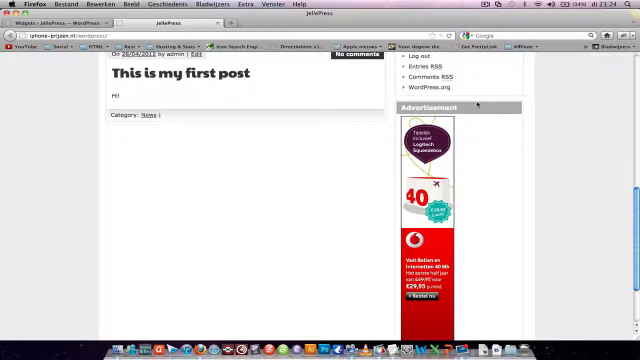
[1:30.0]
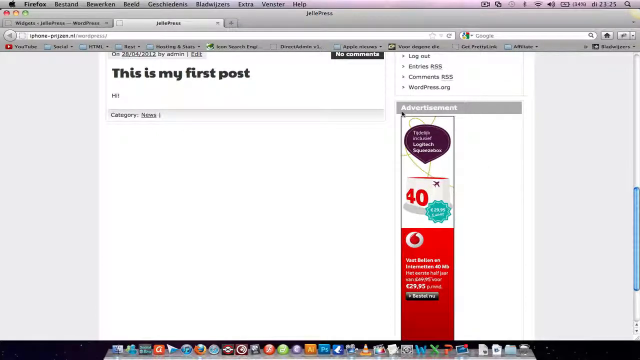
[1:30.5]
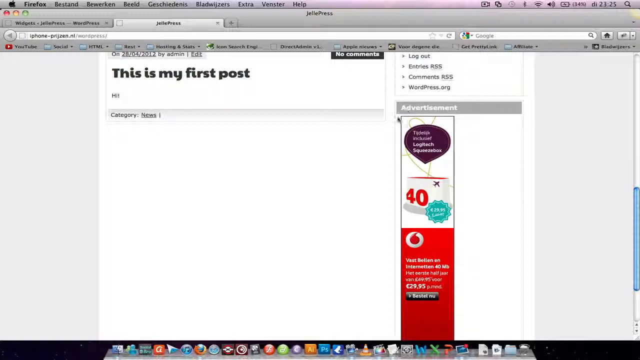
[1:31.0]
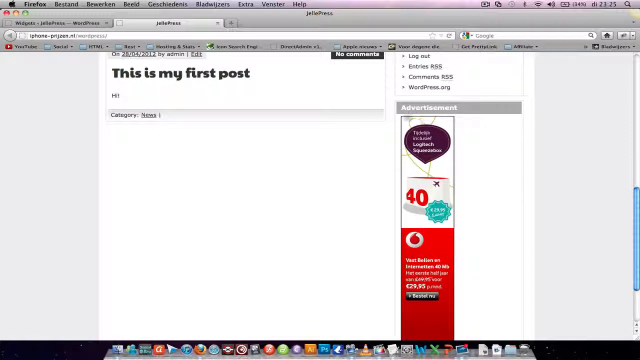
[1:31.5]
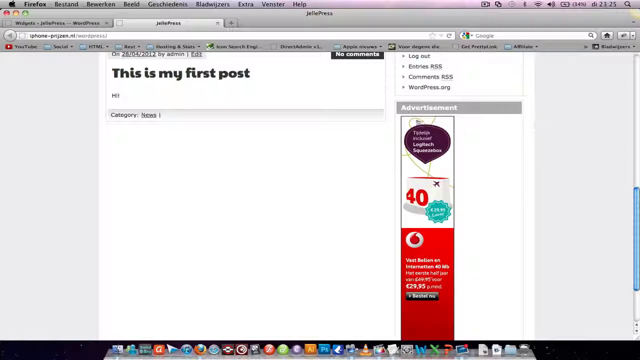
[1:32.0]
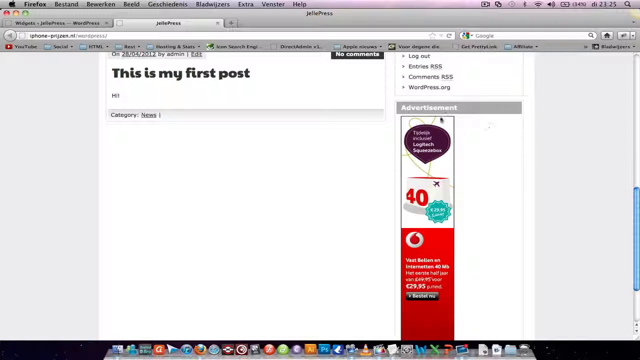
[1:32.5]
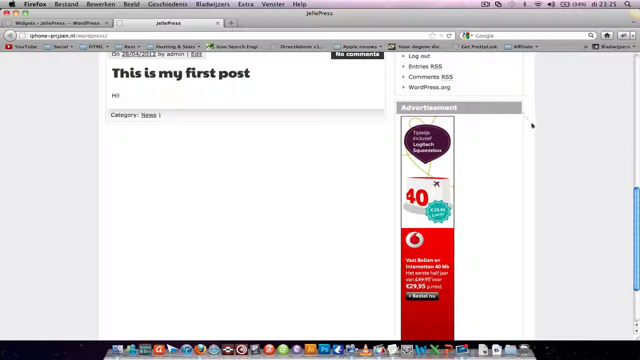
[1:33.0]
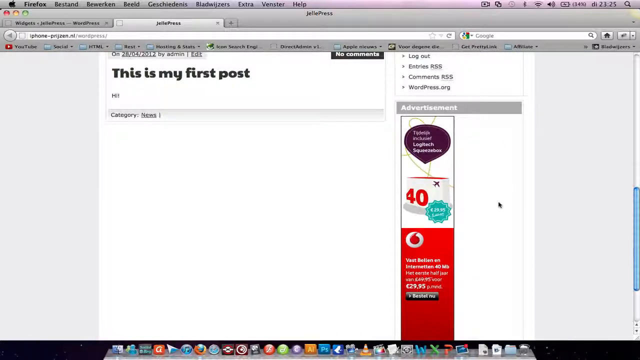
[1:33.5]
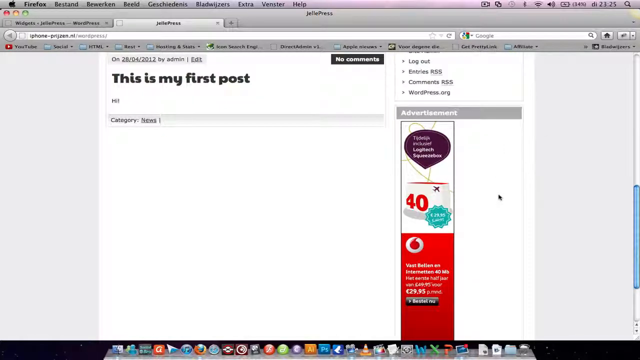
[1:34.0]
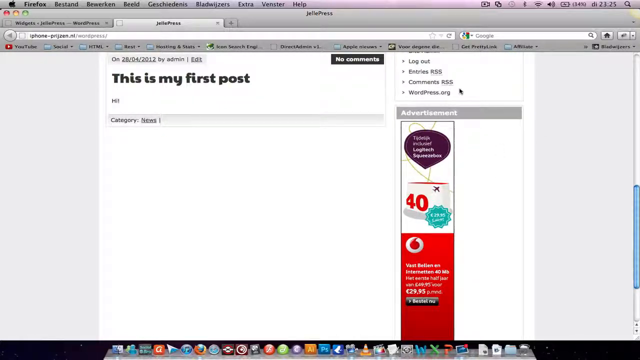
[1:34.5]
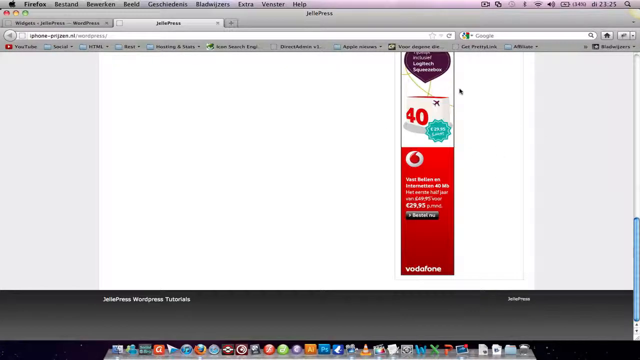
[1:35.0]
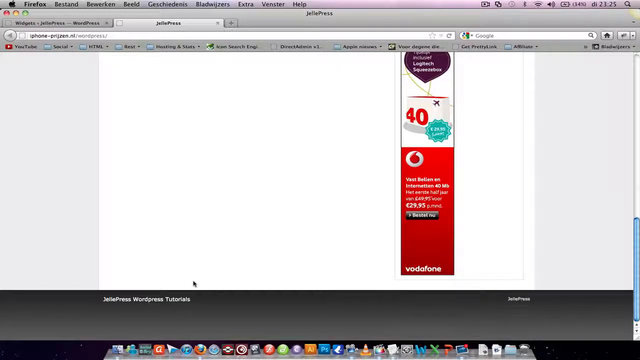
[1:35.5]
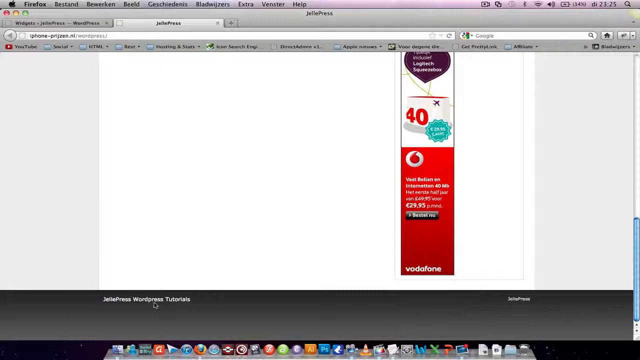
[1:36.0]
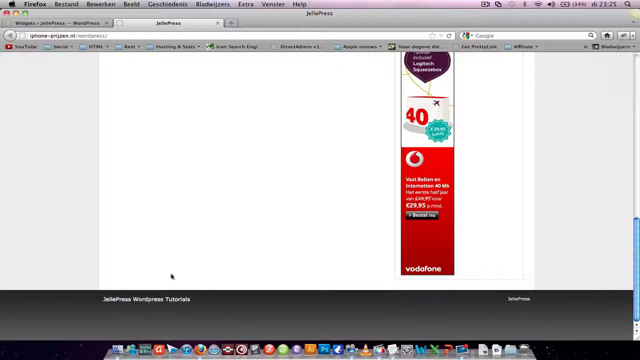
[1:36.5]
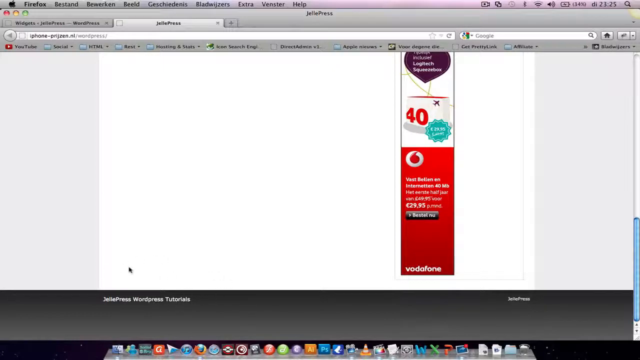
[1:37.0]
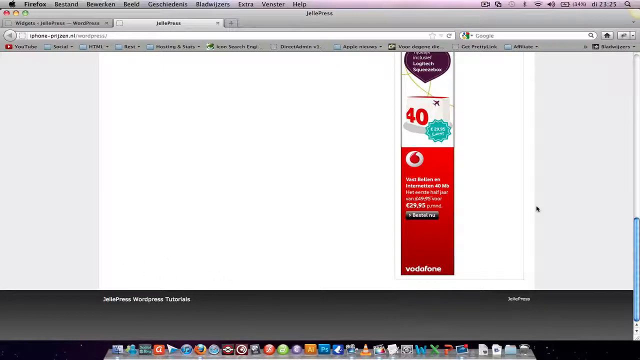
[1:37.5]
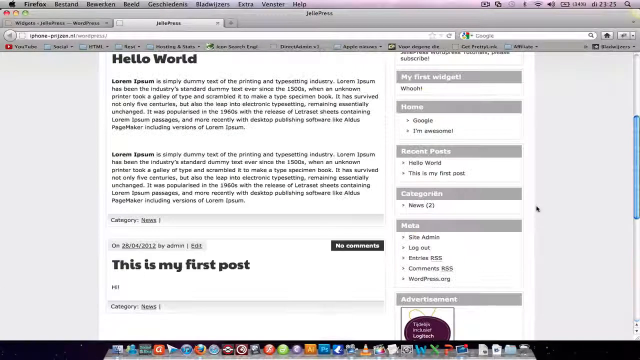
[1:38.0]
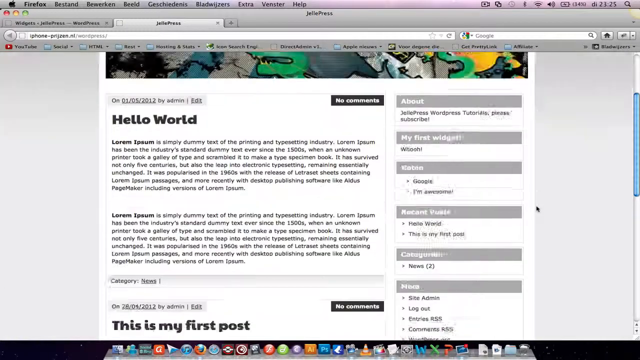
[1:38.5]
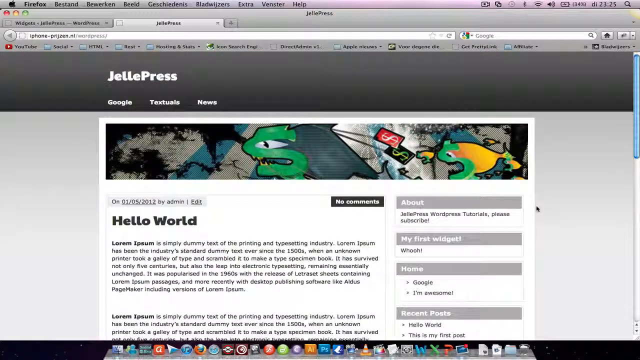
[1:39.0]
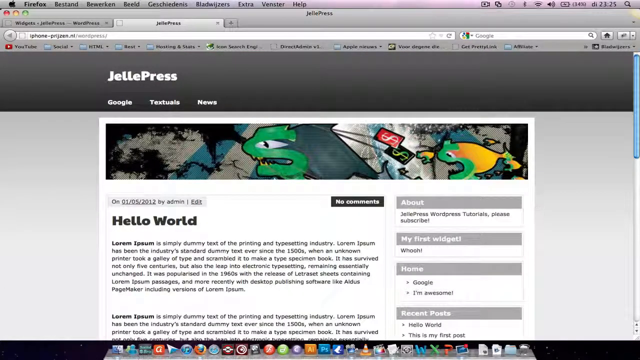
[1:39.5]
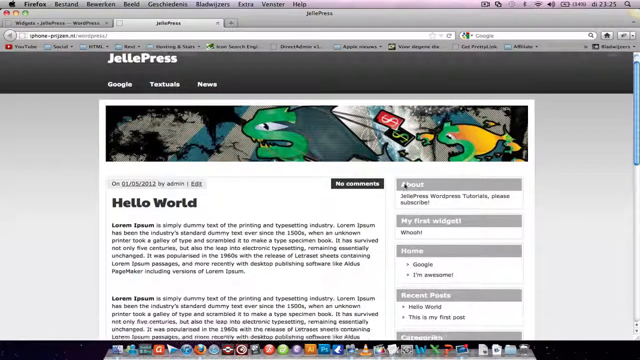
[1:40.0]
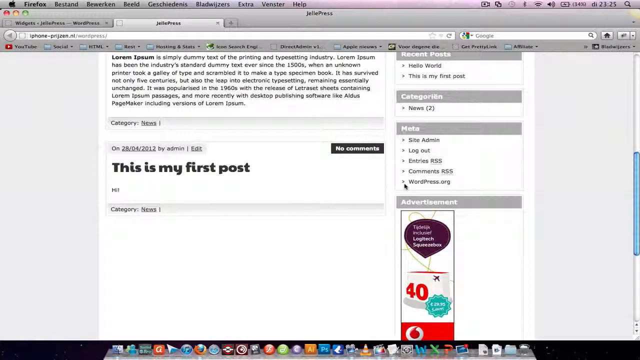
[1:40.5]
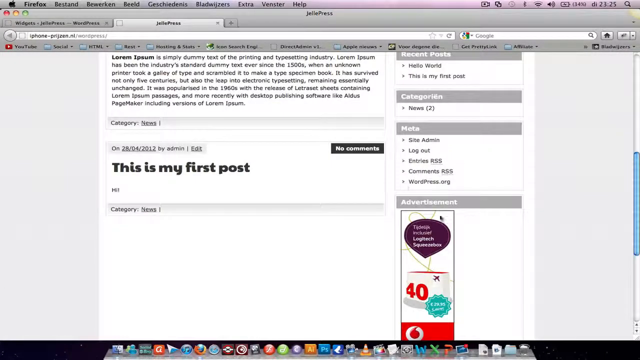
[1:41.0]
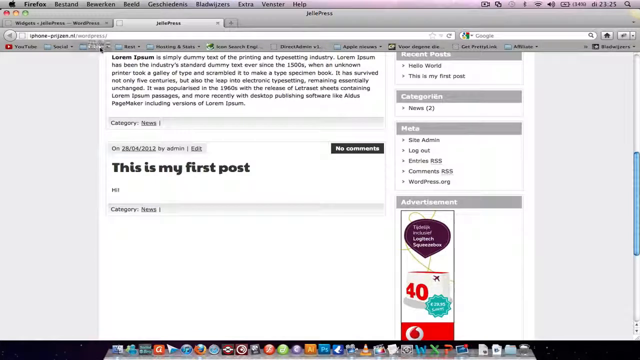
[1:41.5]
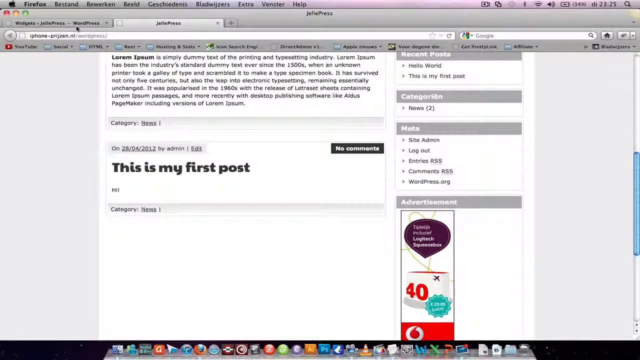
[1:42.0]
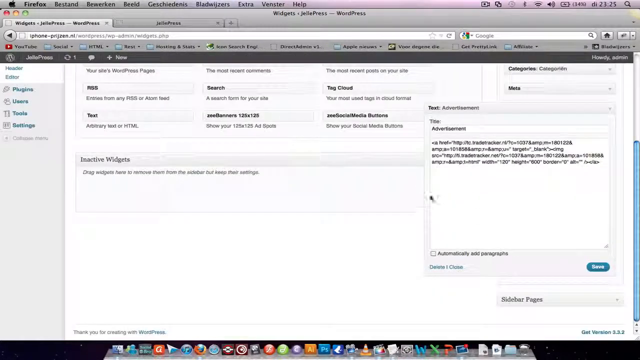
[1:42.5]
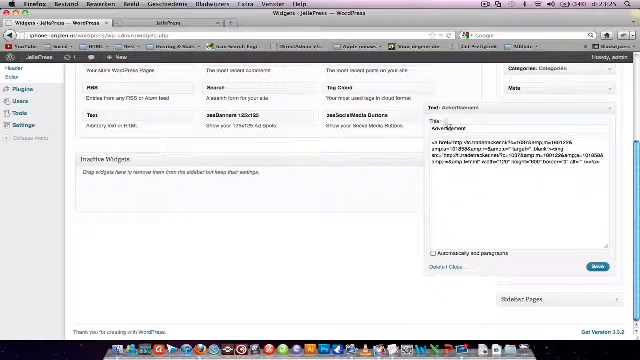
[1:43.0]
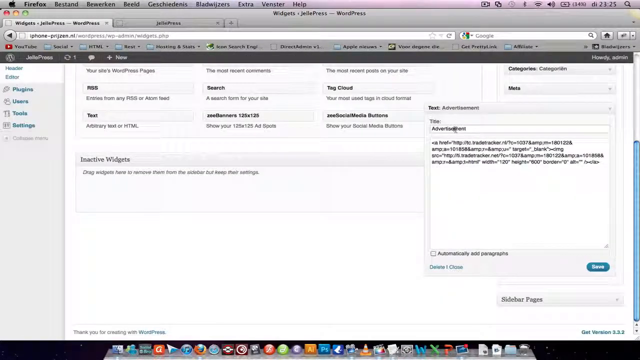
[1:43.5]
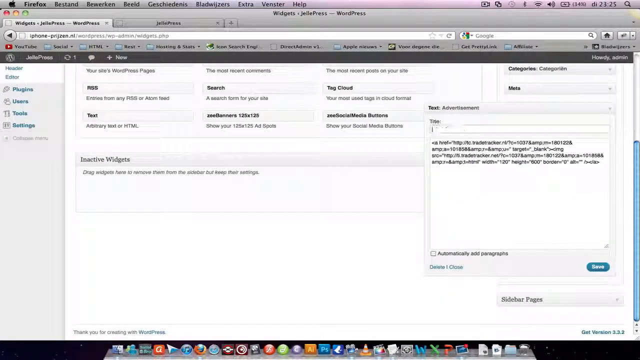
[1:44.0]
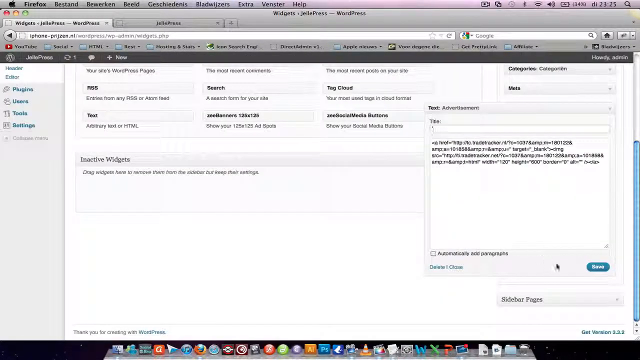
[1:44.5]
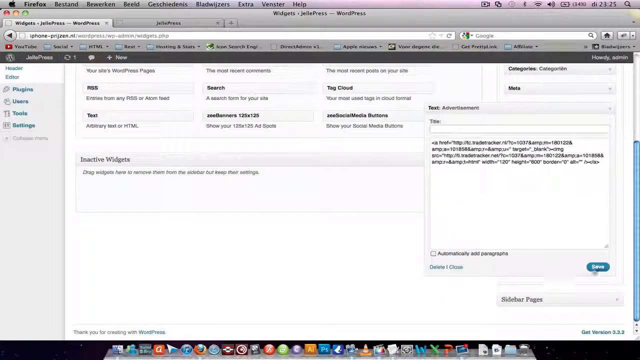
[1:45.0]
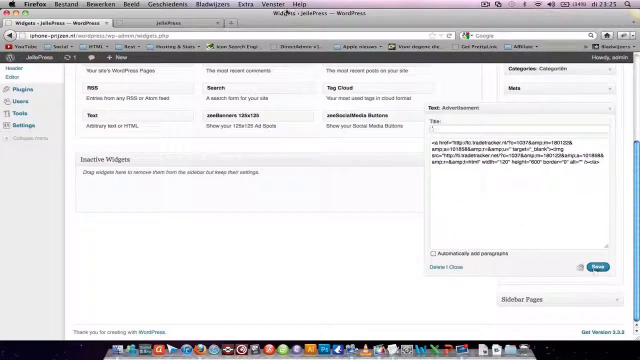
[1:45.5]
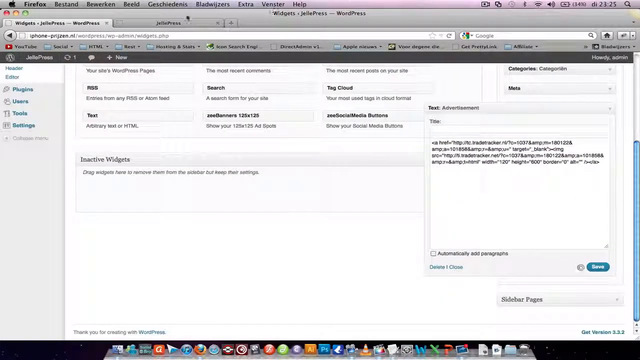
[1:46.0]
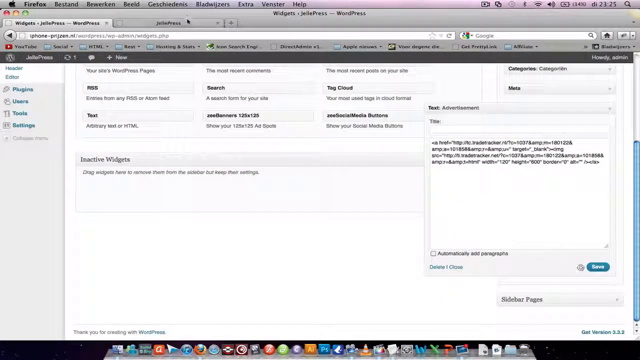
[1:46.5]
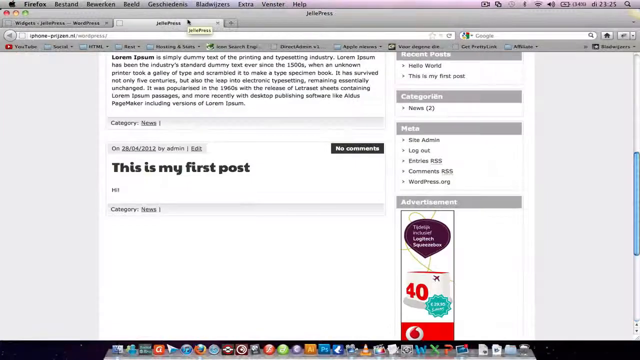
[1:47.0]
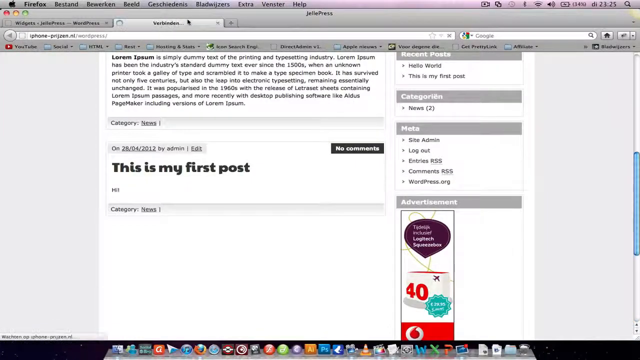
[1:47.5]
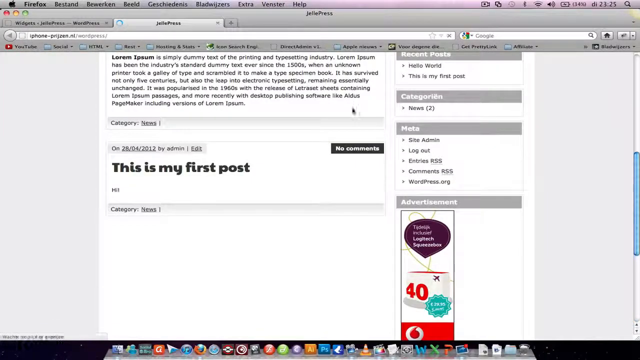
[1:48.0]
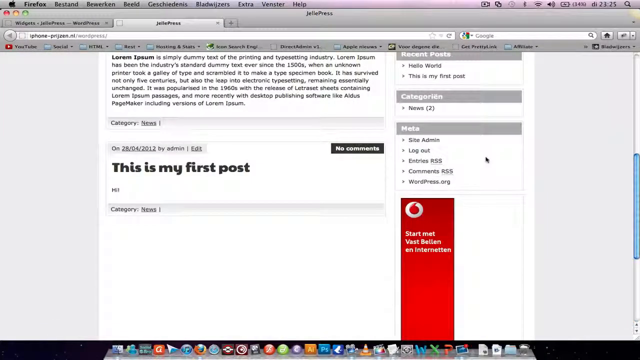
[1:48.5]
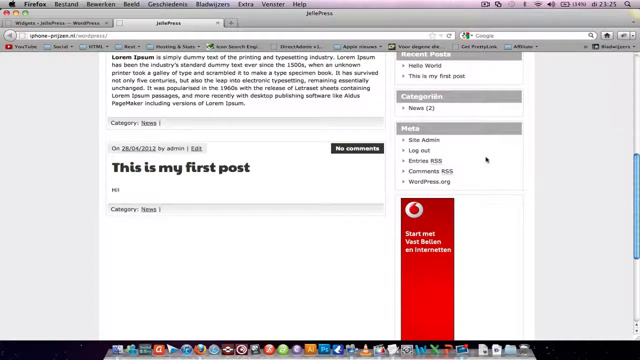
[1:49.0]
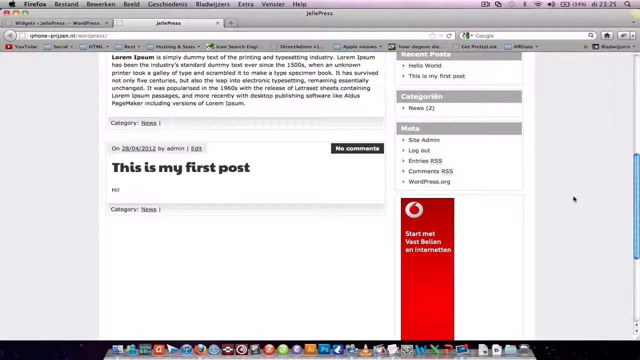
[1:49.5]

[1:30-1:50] The cursor rests on the advertisement, which appears to be an ad for some kind of item. It is in a foreign language; the English words read "Logitech squeeze box", and the price is shown as 29.95 euros. Below that are other words in a button. The person circles the cursor around the words Jelle WordPress at the bottom, moves it back up and back down, and returns to the WordPress widgets page. There, the person erases the word "advertisement" from the title in the still-open text box, saves it, and reloads the page. The advertisement is still there but no longer has the word "advertisement". The page is a white rectangle on a gray background.